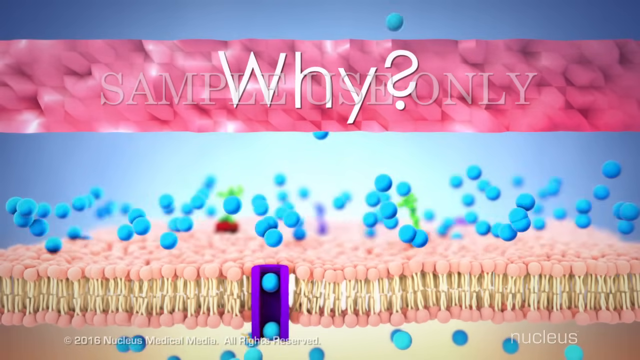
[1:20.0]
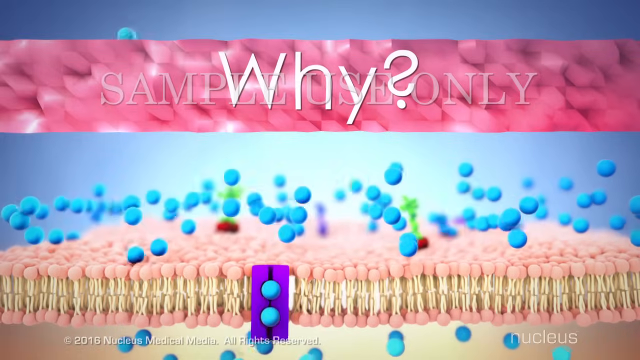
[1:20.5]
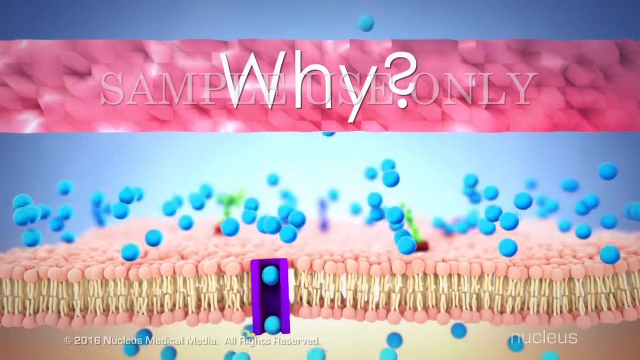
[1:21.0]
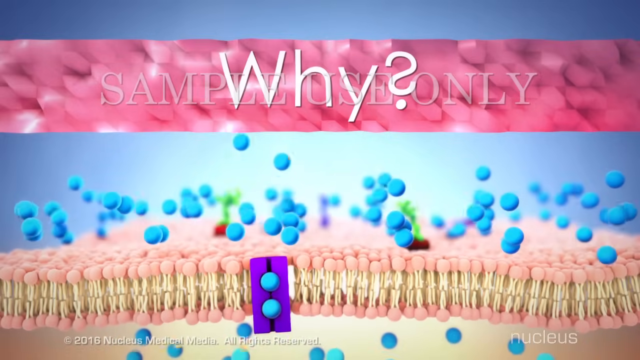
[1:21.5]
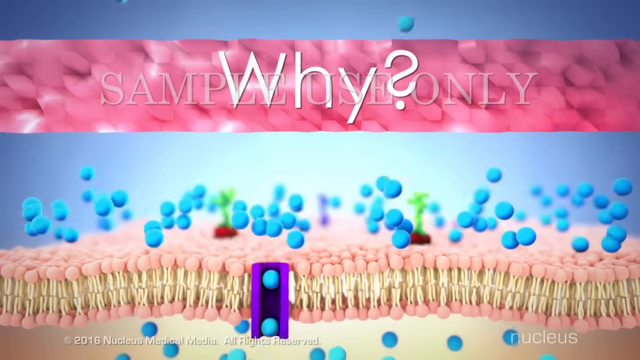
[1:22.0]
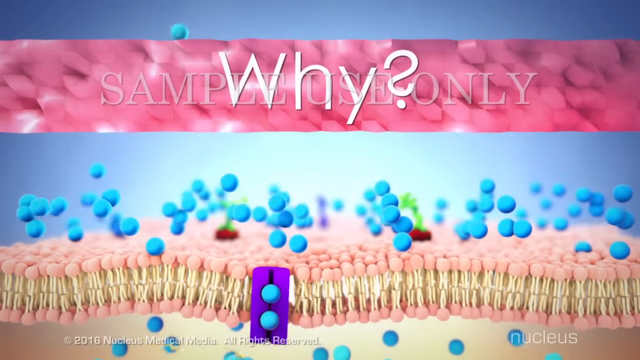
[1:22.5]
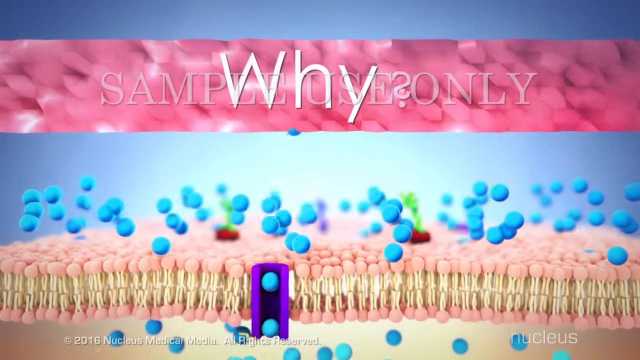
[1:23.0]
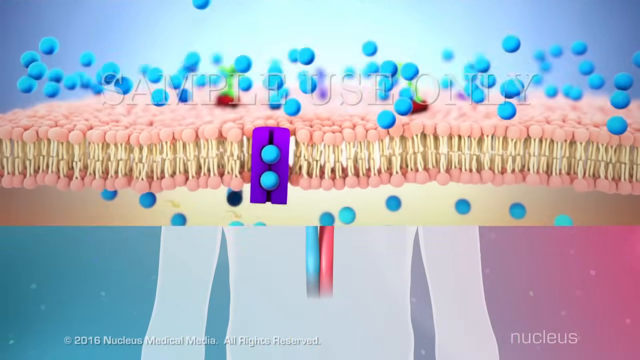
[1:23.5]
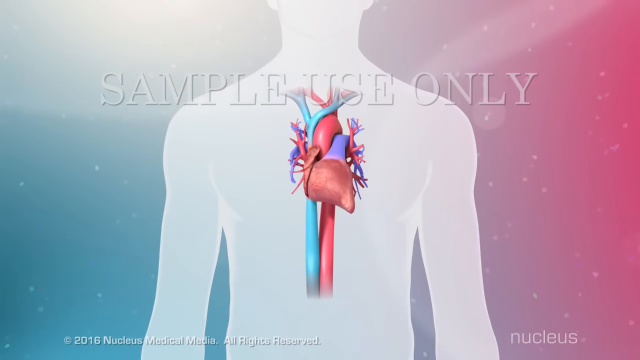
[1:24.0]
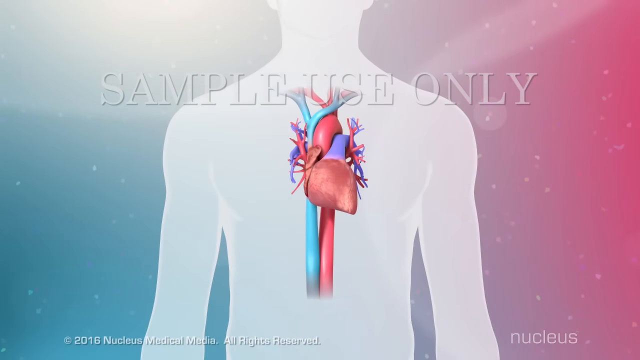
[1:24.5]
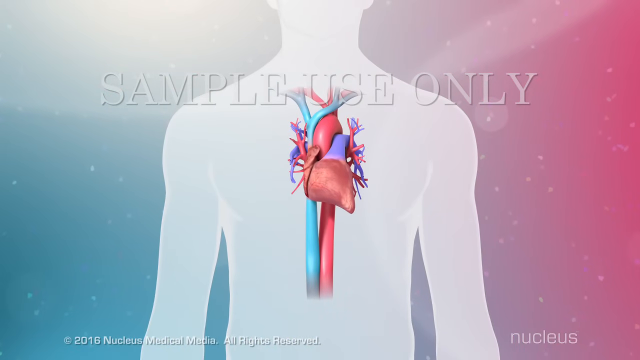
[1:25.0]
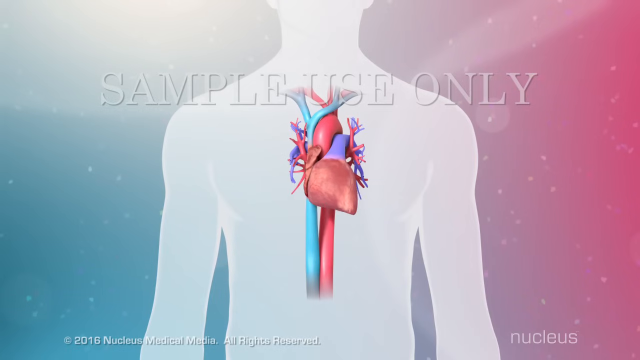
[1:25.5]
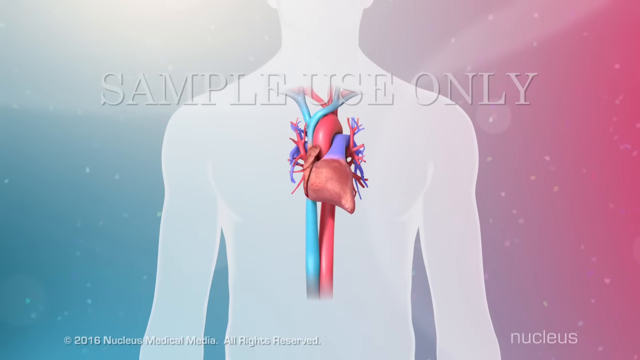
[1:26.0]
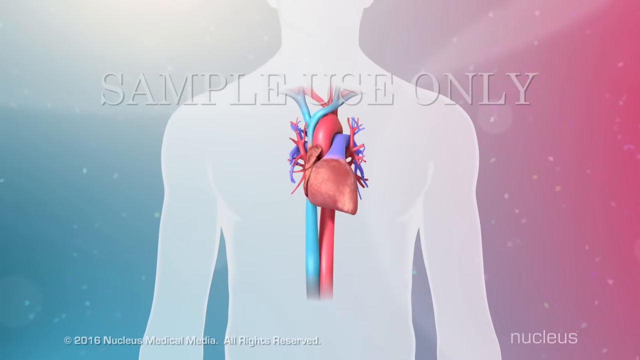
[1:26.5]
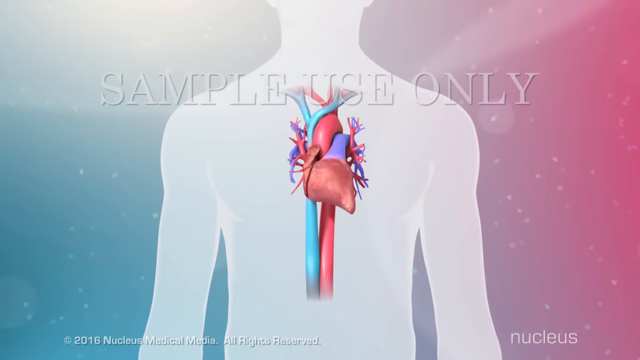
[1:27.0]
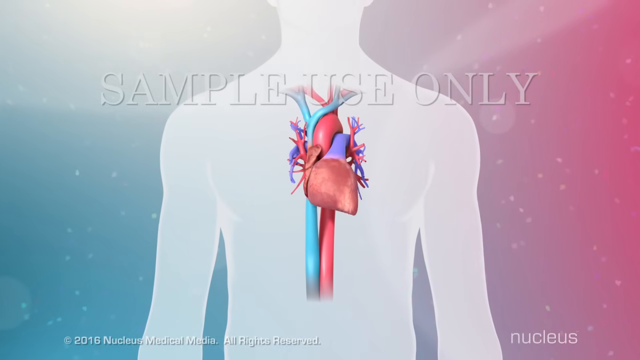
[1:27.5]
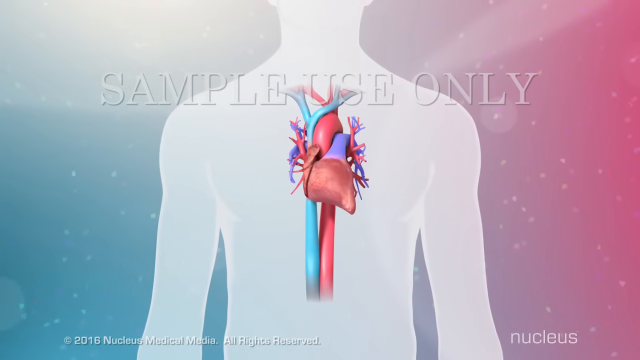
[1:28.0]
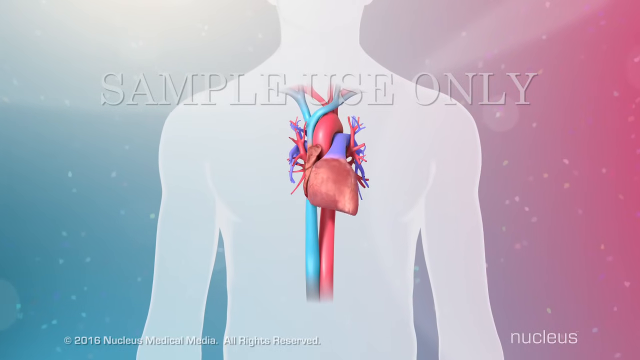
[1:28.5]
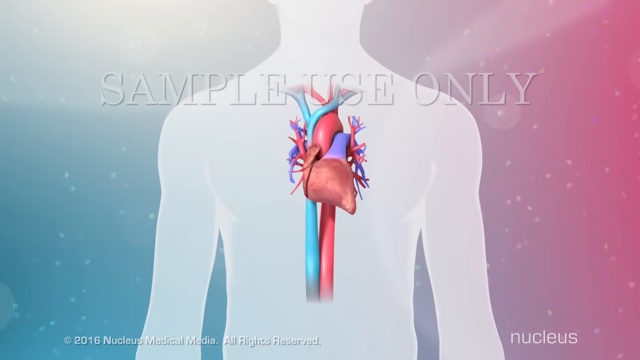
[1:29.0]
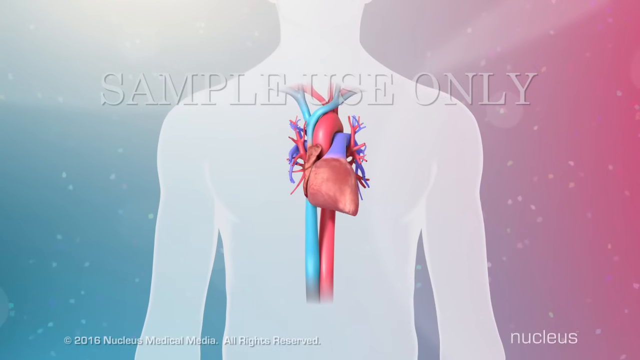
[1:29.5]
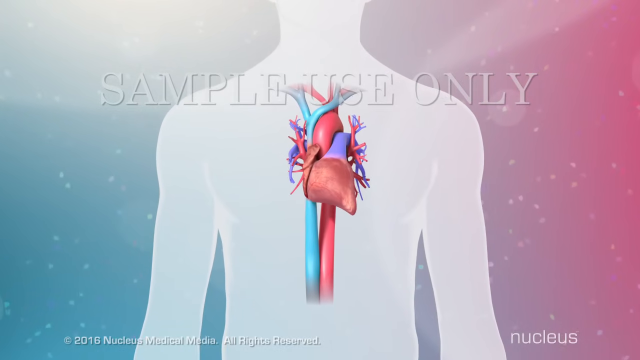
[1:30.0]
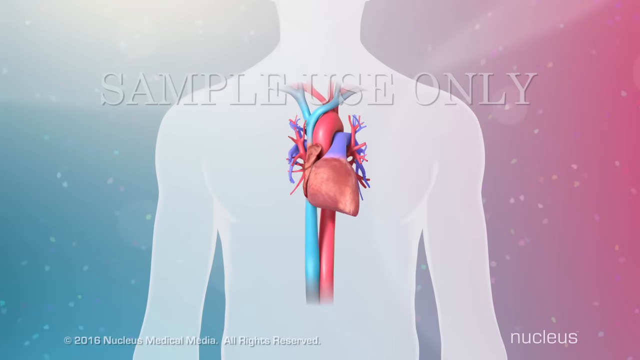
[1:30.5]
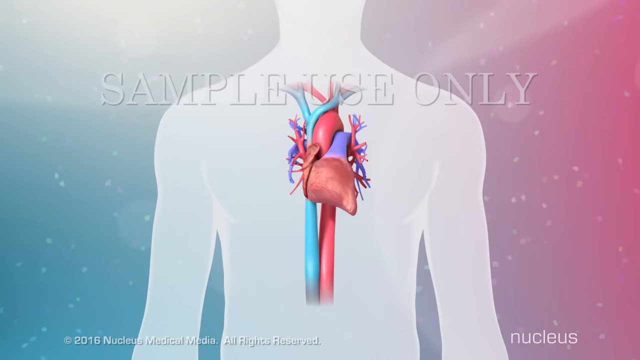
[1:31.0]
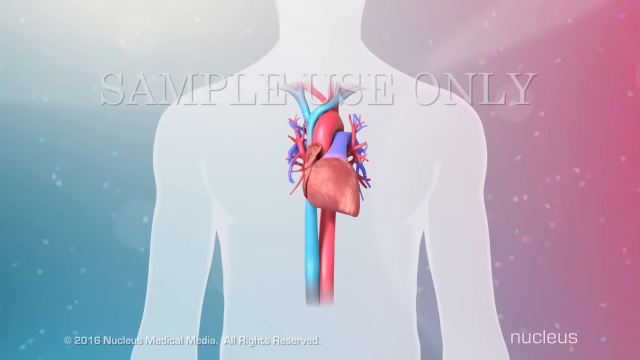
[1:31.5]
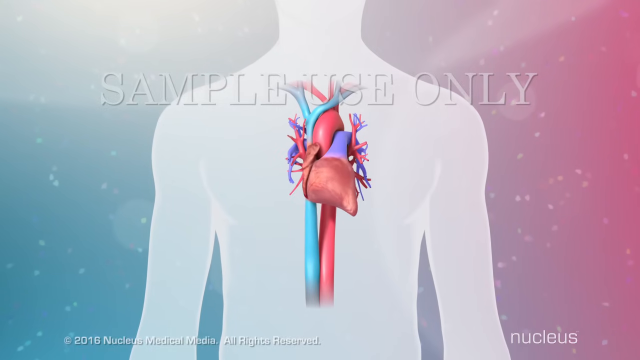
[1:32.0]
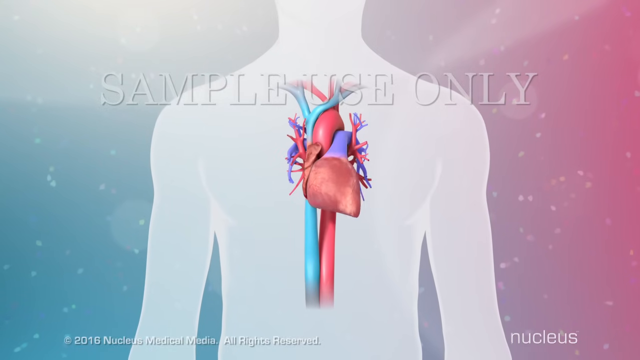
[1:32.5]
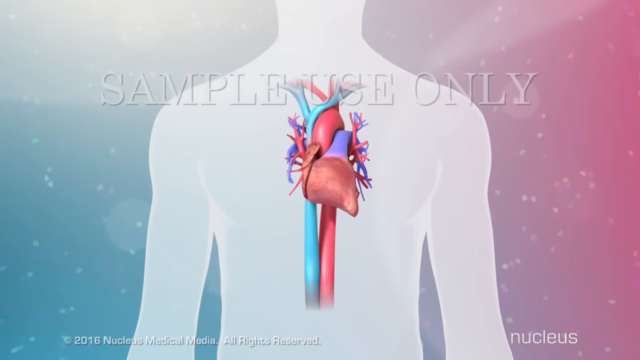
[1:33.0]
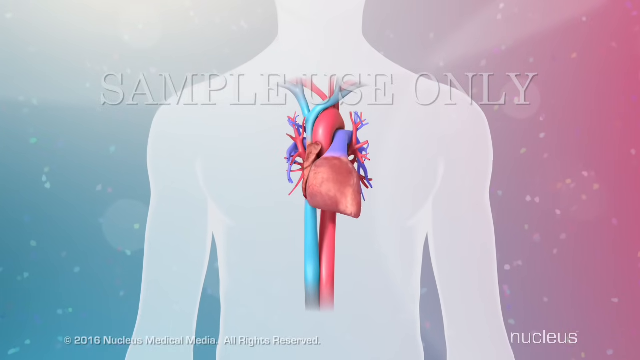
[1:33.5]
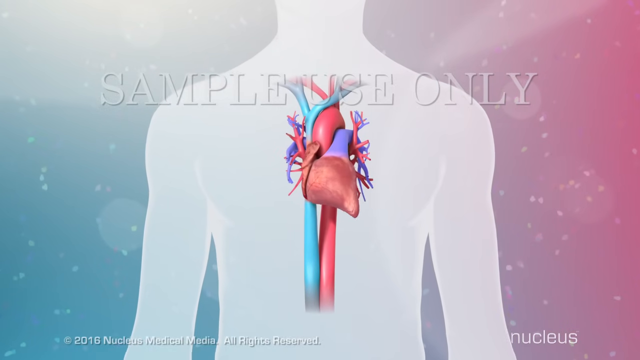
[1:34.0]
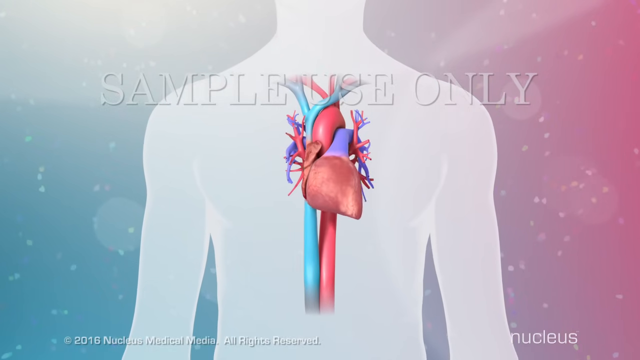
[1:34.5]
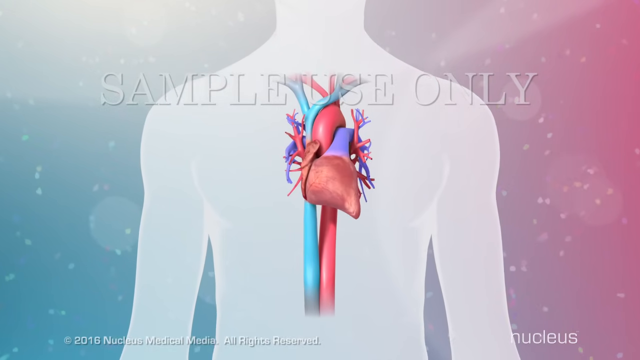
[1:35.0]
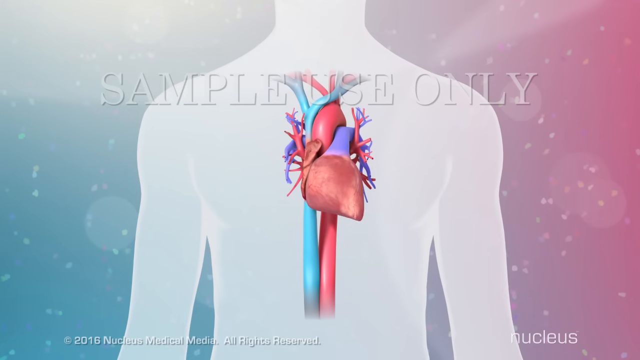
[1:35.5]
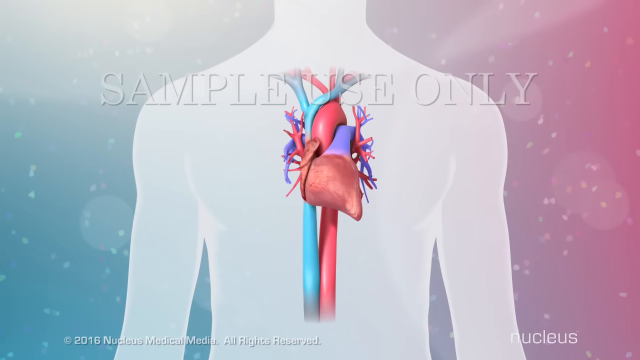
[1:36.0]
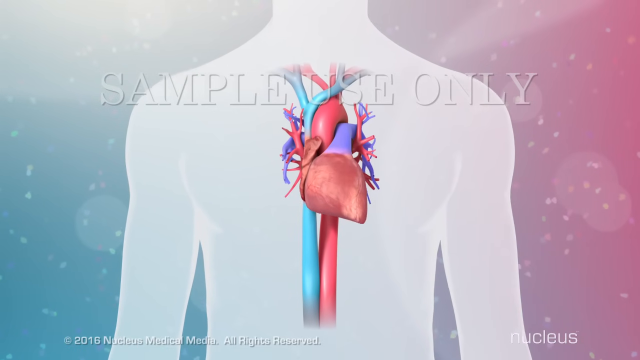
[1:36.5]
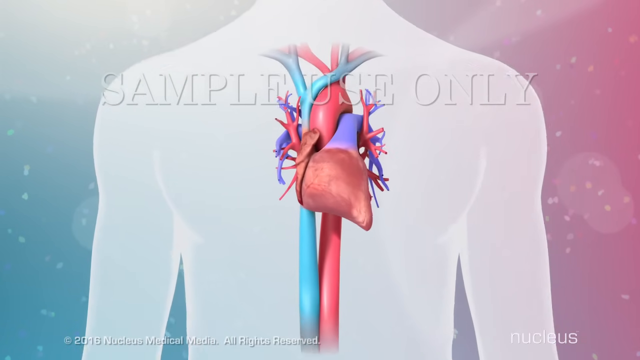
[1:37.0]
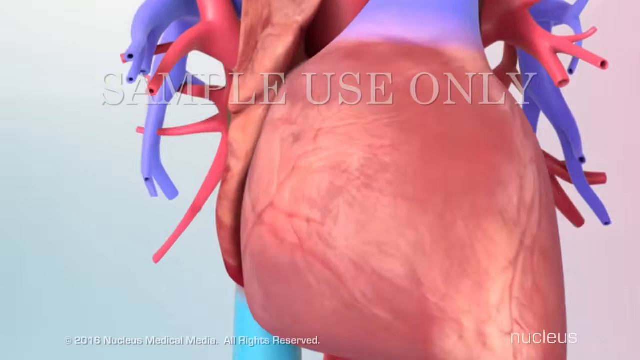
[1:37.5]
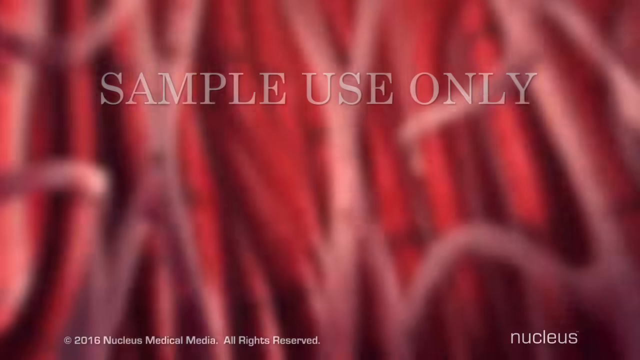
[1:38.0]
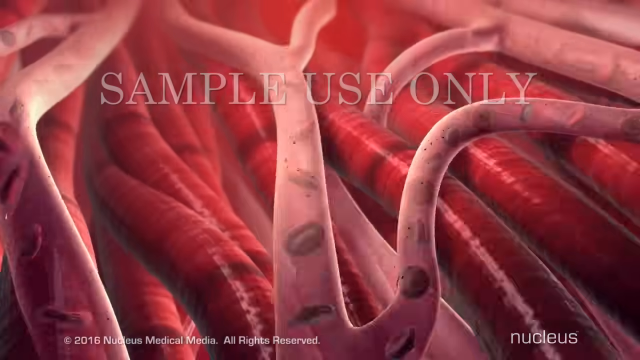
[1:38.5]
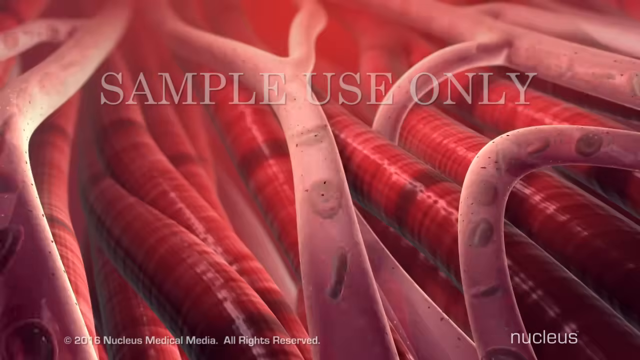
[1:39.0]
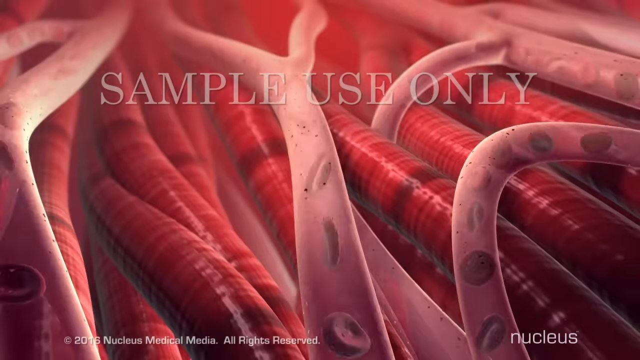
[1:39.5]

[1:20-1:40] A little more active transport is shown, then the scene changes to an animation of a human heart complete with veins and aorta, with a text overlay that says "sample use only." The outline of a human body appears in white, and the heart gets larger and makes a pumping motion about five or six times. The camera zooms in slowly, then very rapidly, until it shows the inner workings of the heart, with veins, capillaries and red blood cells going through the heart. Fine print at the bottom of the screen is hard to read but appears to say "Nucleus Media, Medical Media, All Rights Reserved."